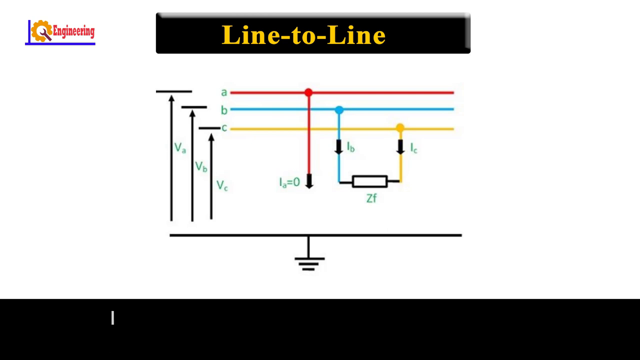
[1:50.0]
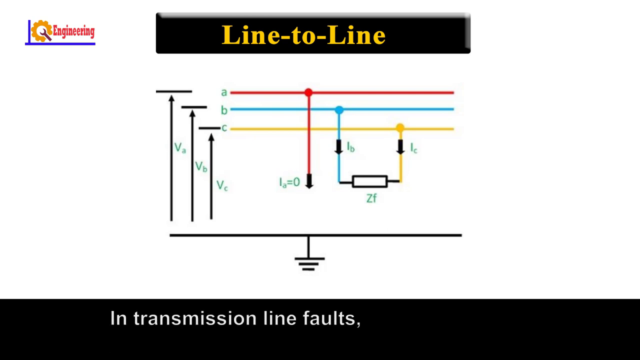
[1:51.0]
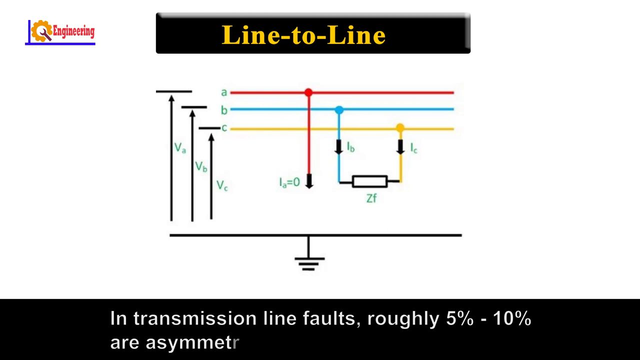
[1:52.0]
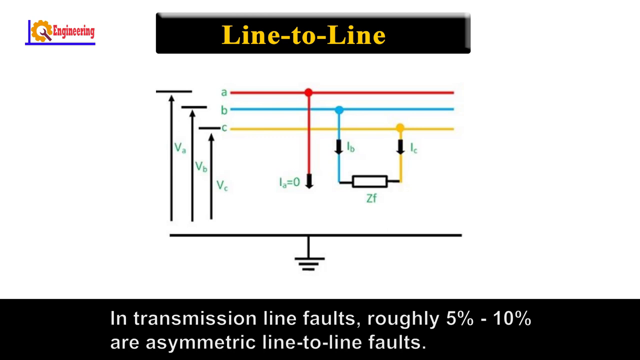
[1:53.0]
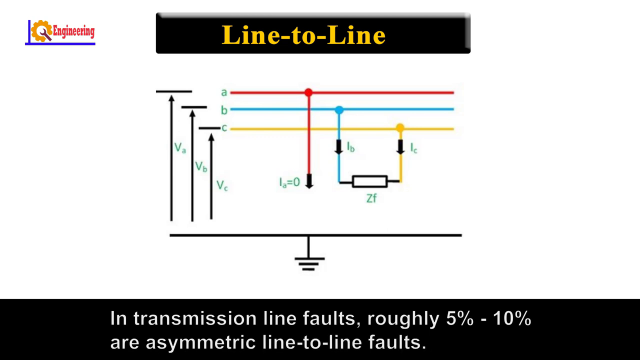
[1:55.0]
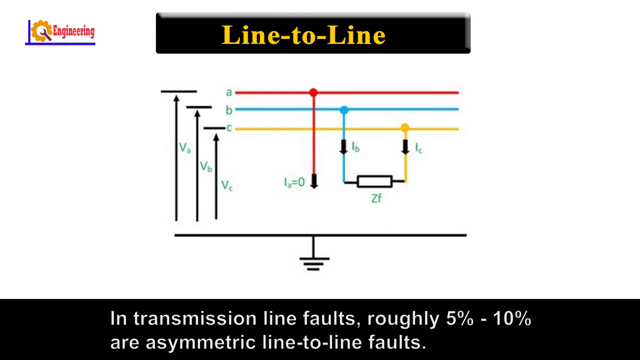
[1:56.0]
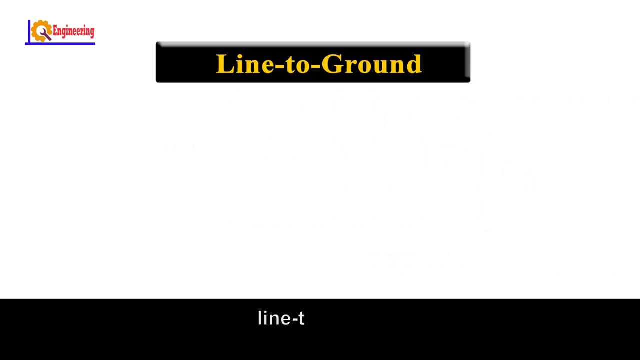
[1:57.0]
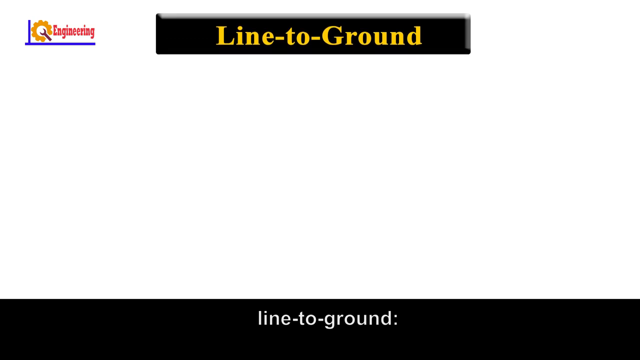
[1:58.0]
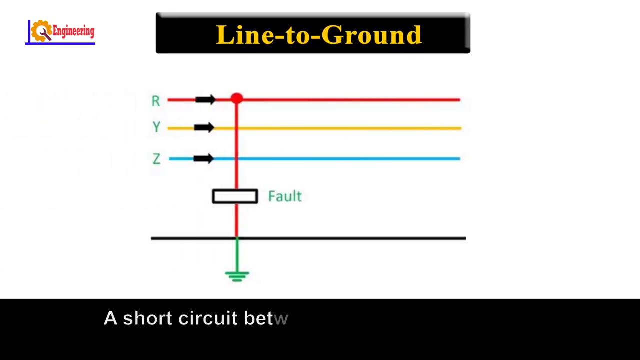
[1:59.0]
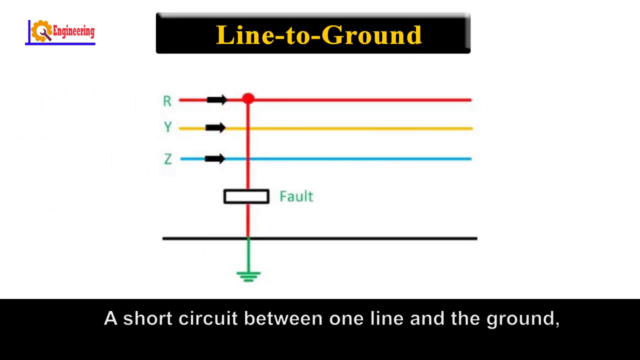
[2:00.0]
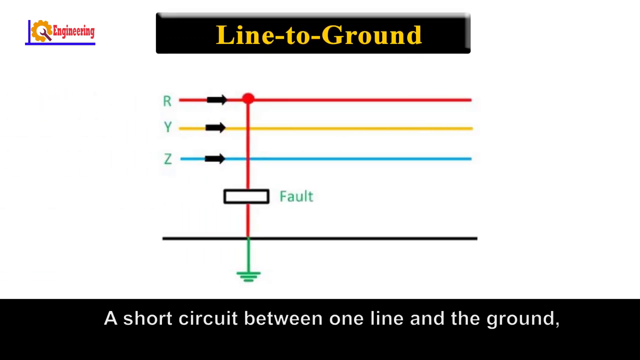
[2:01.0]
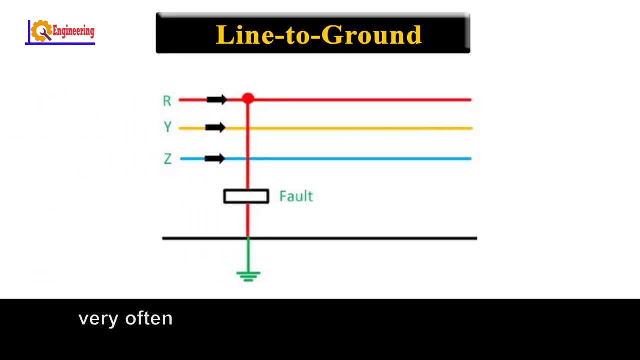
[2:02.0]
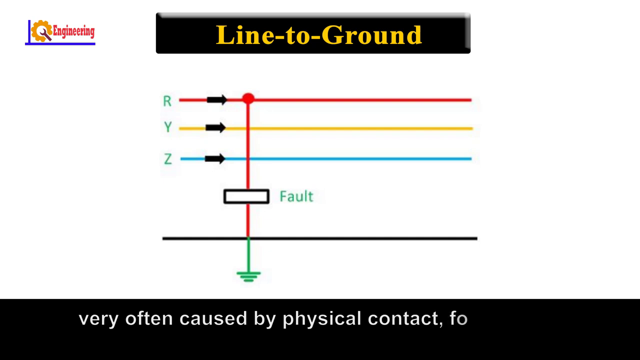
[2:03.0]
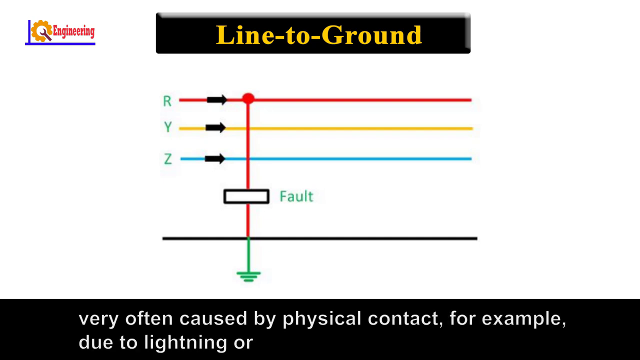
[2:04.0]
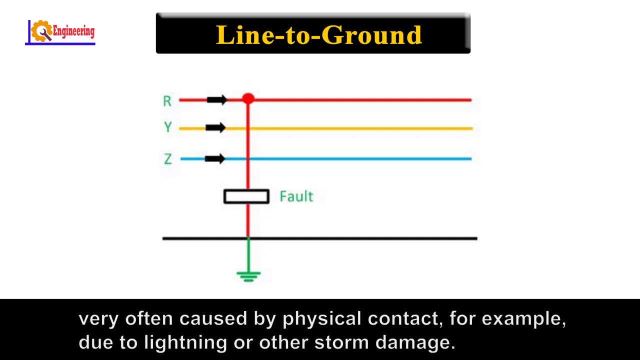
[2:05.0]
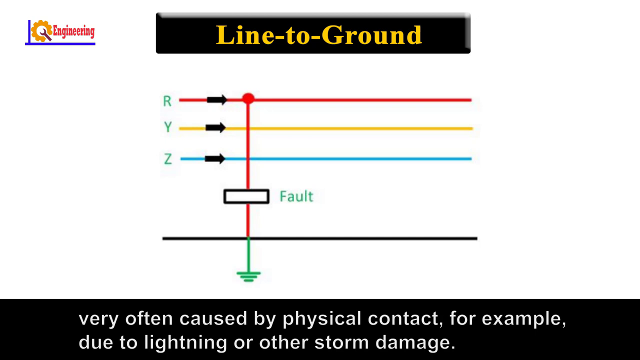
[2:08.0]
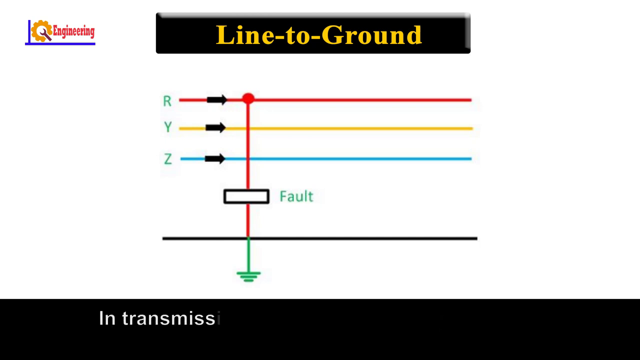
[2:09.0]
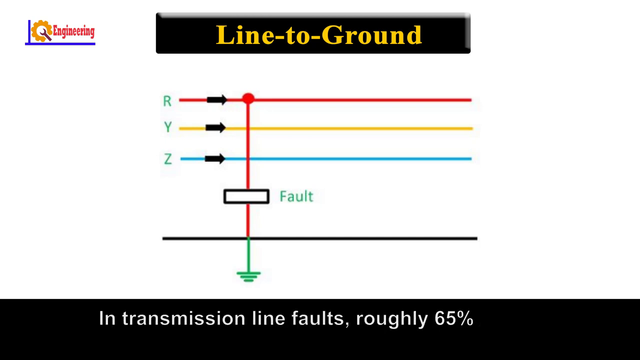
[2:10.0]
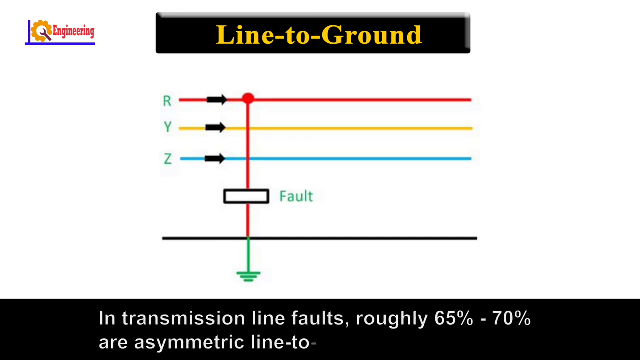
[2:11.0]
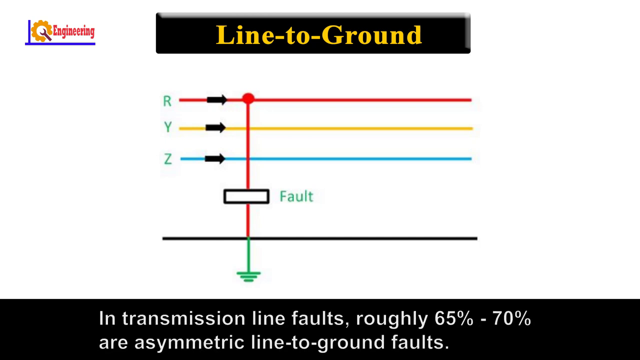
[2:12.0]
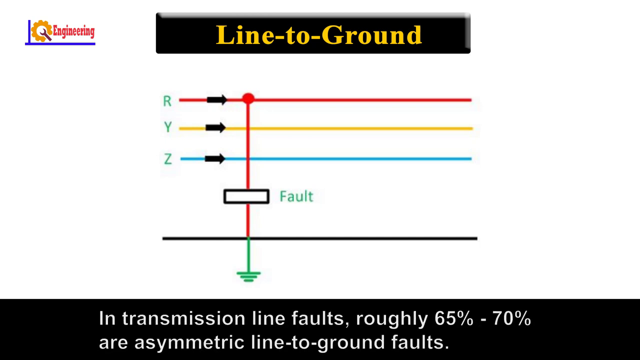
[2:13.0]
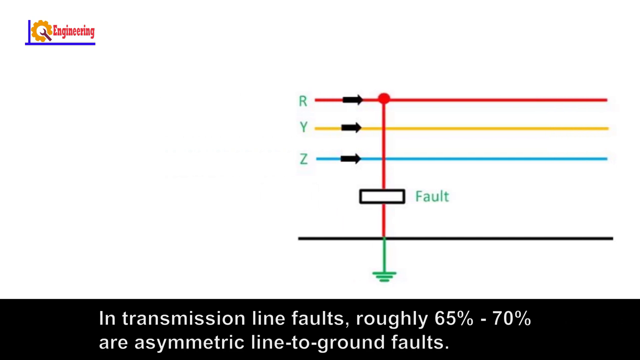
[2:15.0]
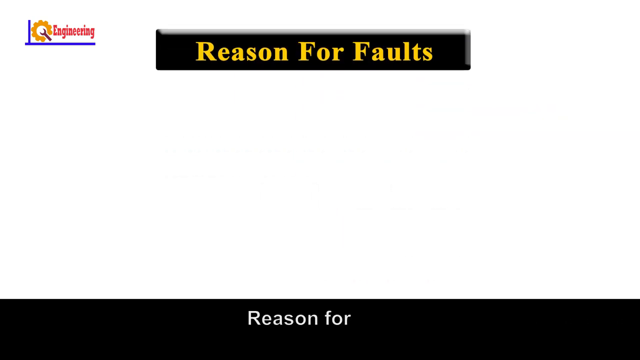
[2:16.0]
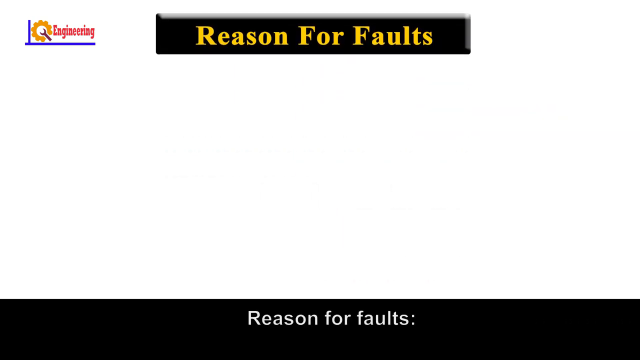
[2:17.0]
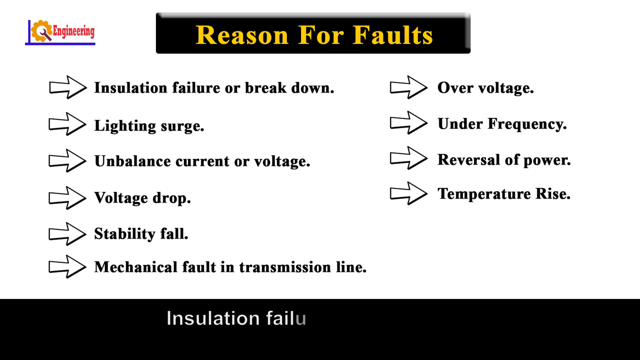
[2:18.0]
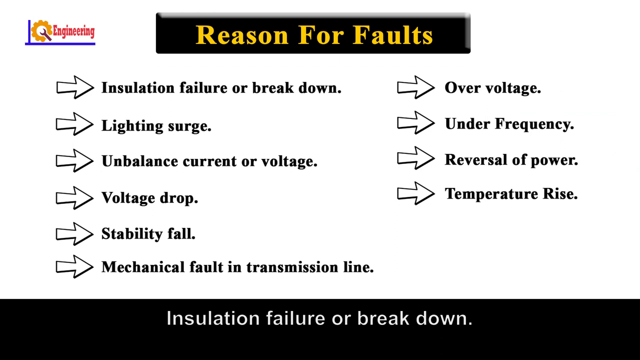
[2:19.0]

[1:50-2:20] The line-to-line asymmetric fault is shown as roughly 5-10% of asymmetric faults. Line-to-ground comes next; the caption says it is very often caused by physical contact, for example due to lightning or other storm damage, and that 65-75% of asymmetric faults in transmission lines are line-to-ground. Reasons for the faults are listed with an arrow pointing to the right: insulation failure or breakdown, lightning surge, unbalanced current or voltage, voltage drop, stability fault, mechanical fault in transmission line, over-voltage, under-frequency, reversal of power, and temperature rise.